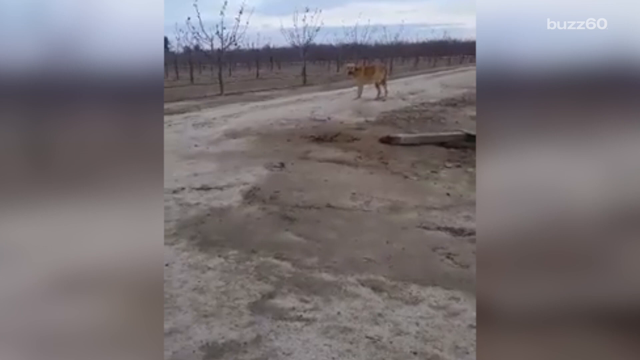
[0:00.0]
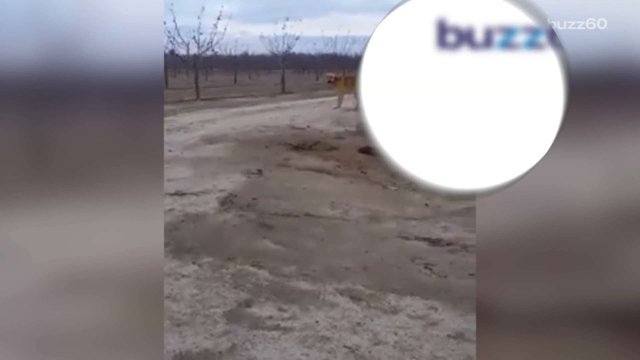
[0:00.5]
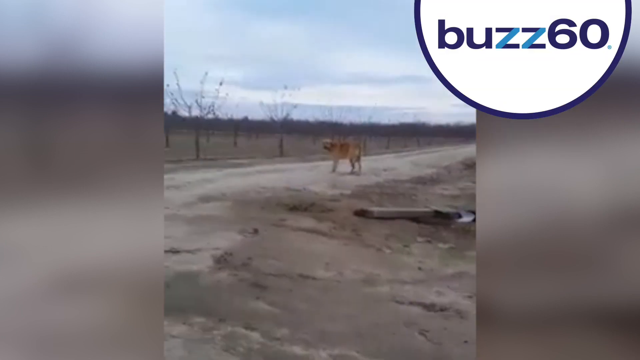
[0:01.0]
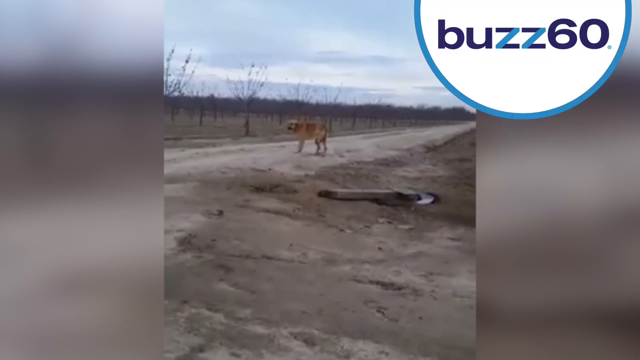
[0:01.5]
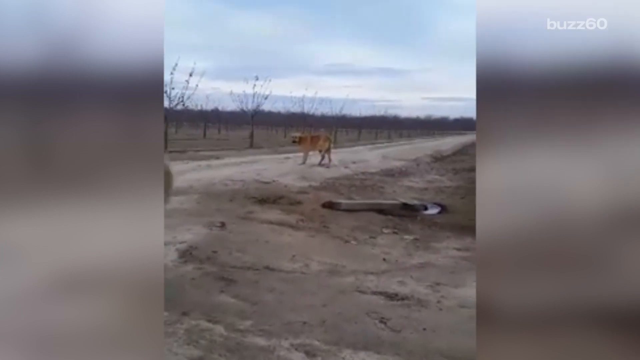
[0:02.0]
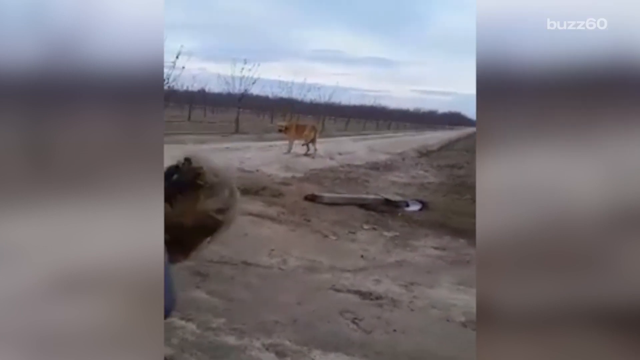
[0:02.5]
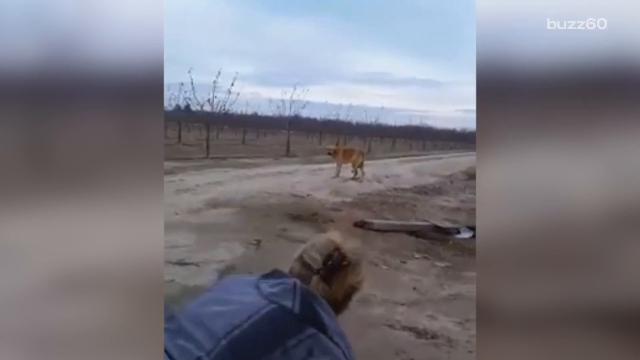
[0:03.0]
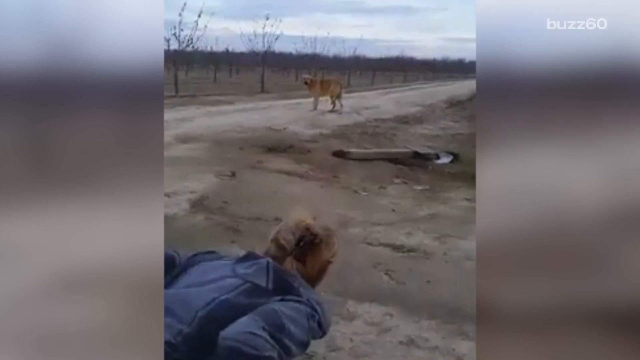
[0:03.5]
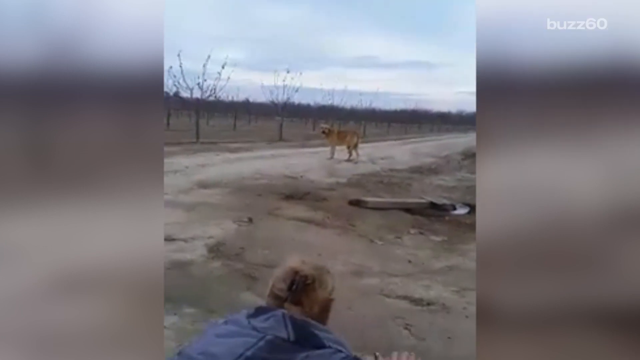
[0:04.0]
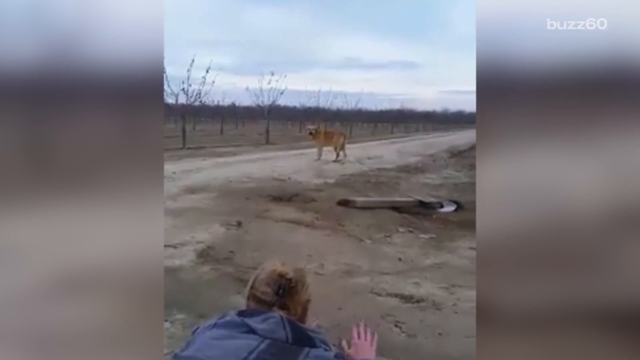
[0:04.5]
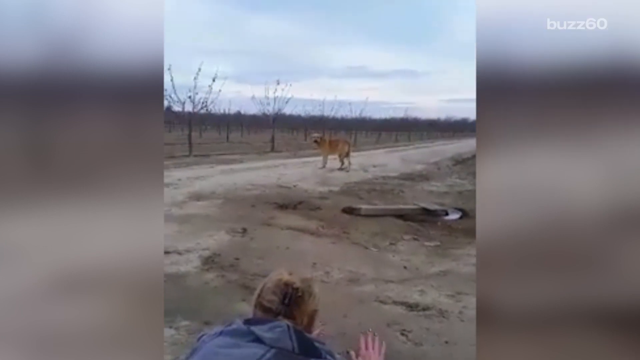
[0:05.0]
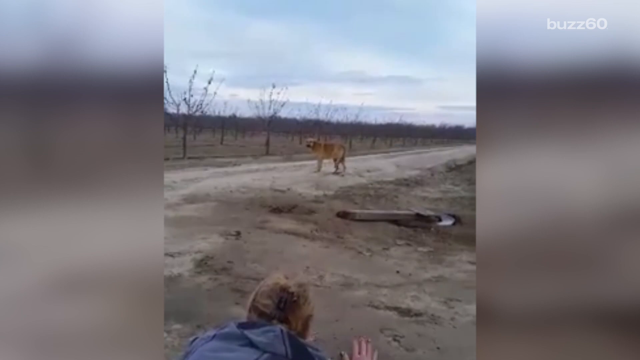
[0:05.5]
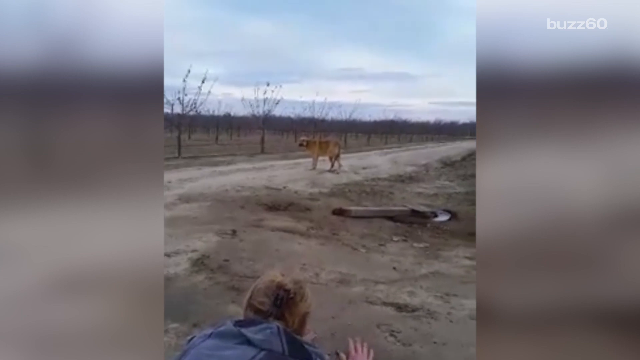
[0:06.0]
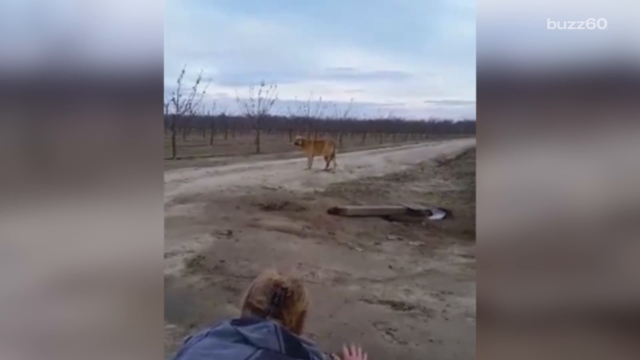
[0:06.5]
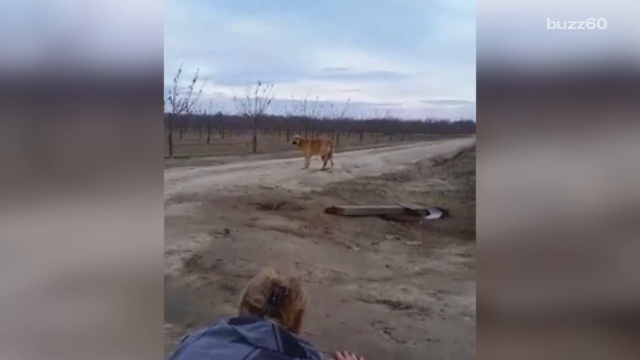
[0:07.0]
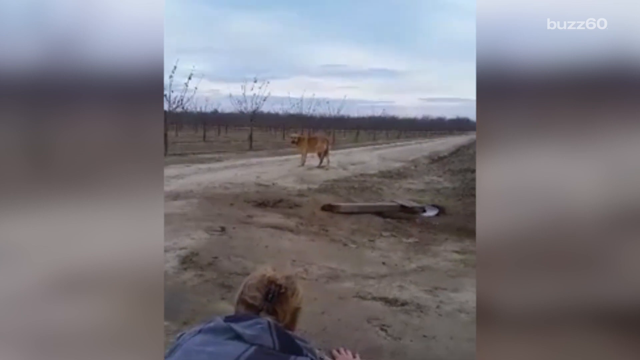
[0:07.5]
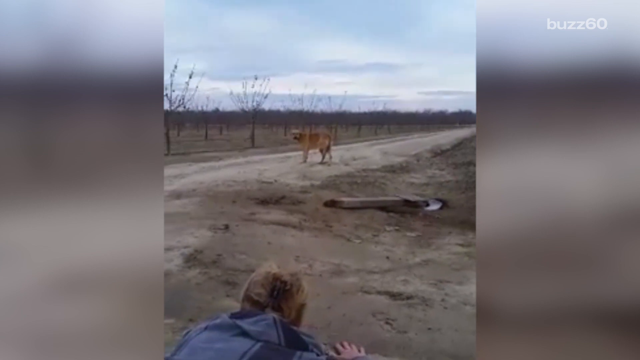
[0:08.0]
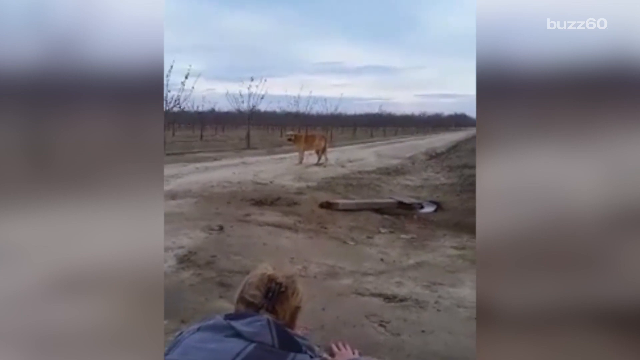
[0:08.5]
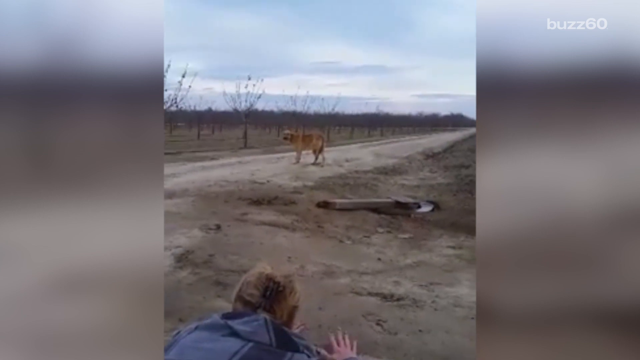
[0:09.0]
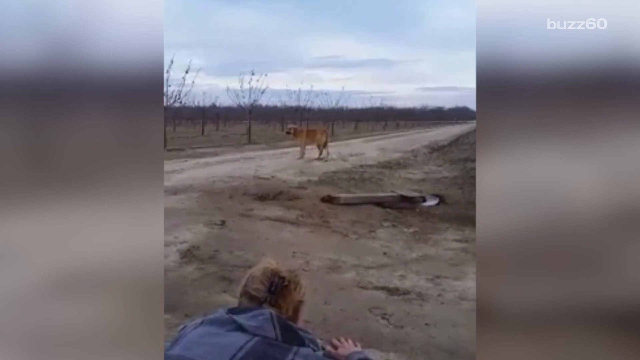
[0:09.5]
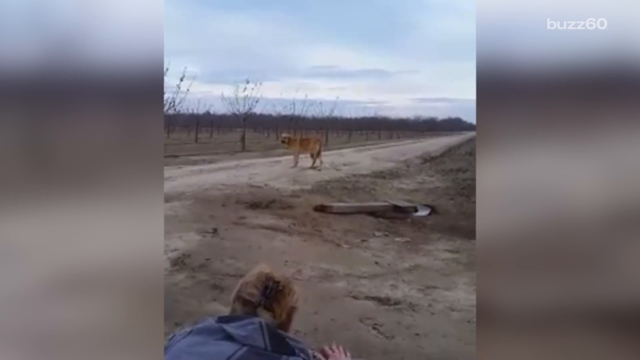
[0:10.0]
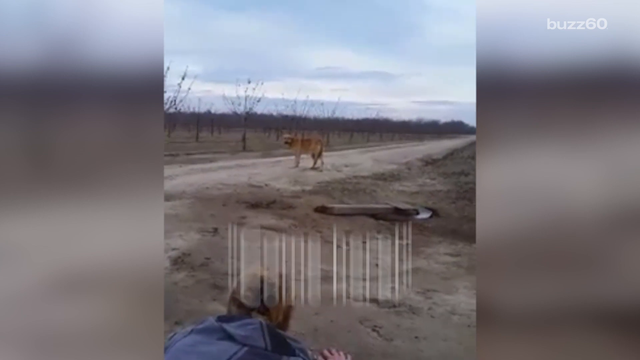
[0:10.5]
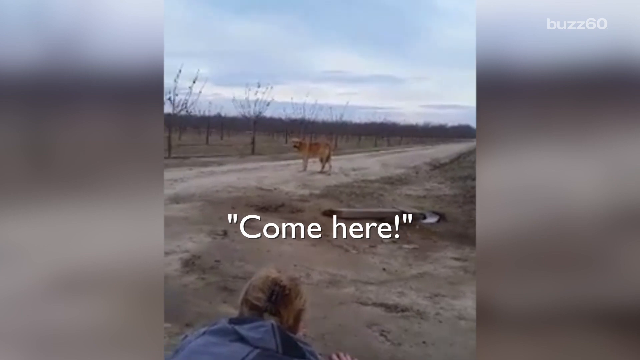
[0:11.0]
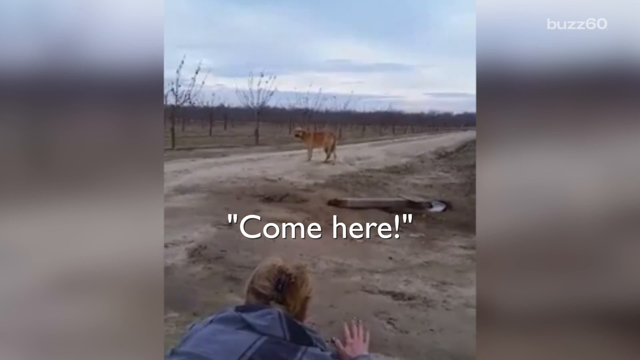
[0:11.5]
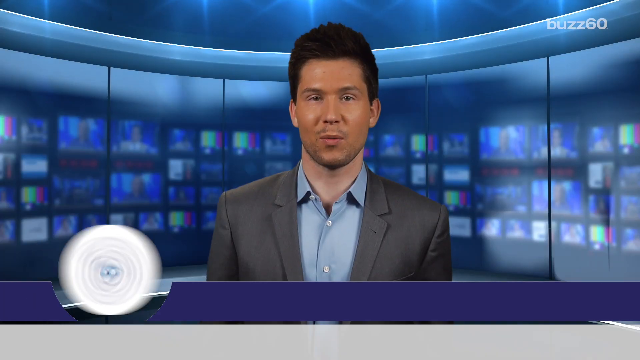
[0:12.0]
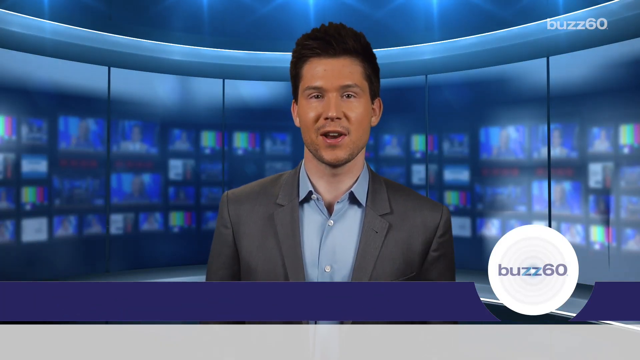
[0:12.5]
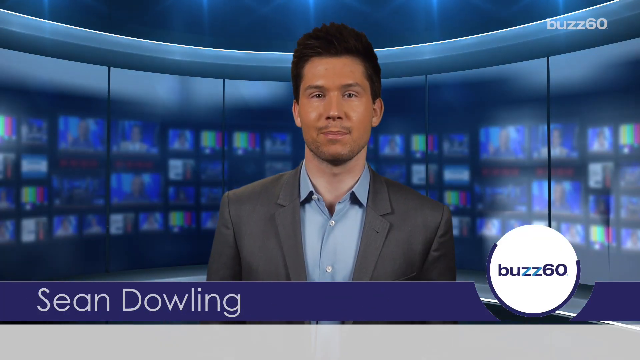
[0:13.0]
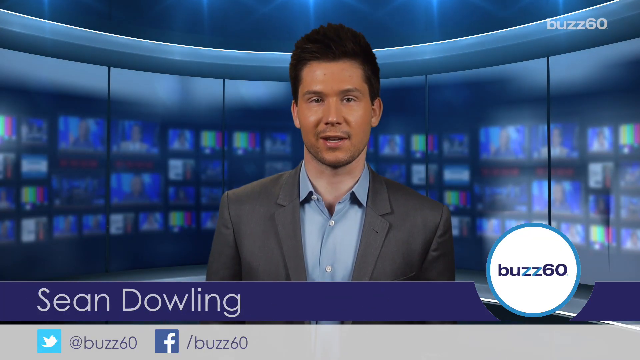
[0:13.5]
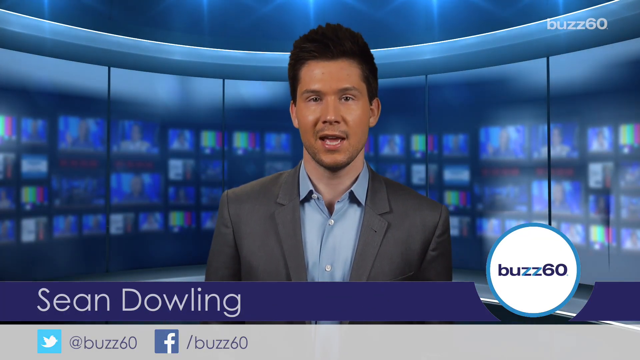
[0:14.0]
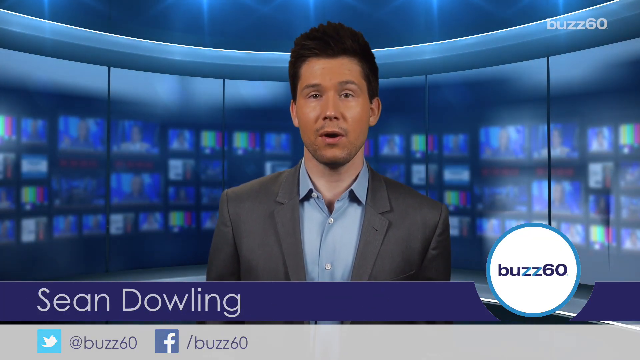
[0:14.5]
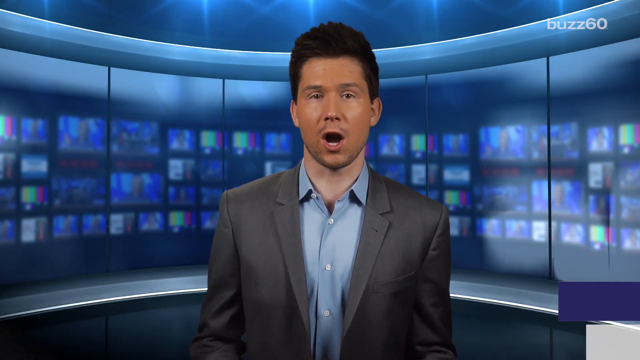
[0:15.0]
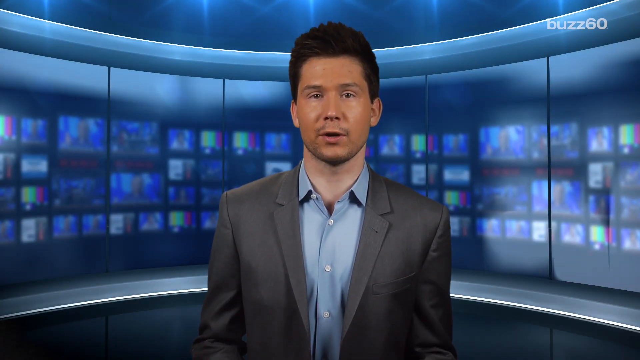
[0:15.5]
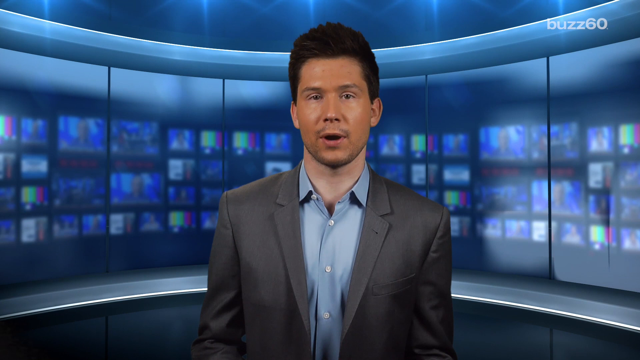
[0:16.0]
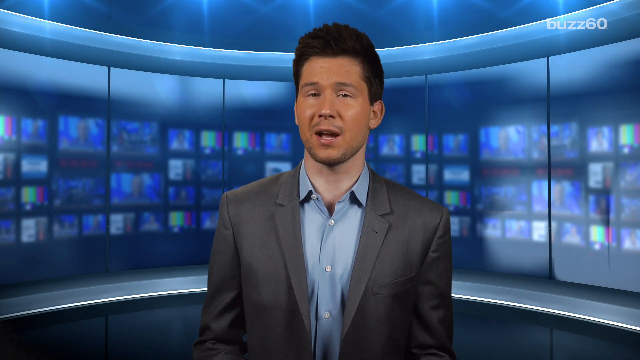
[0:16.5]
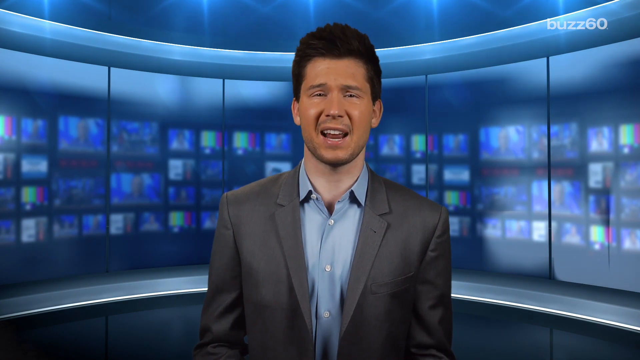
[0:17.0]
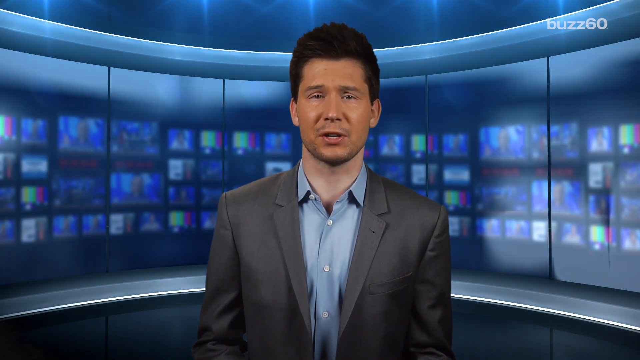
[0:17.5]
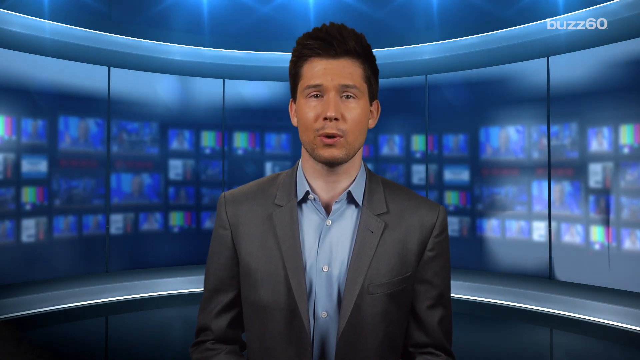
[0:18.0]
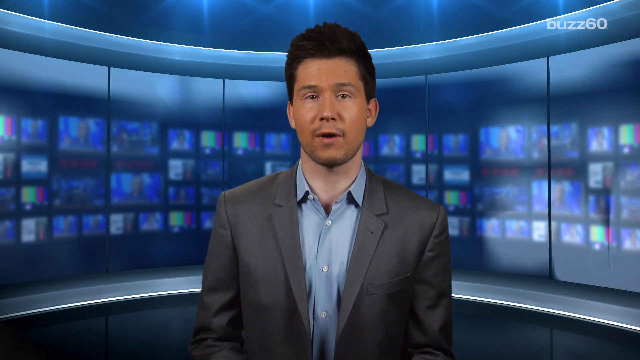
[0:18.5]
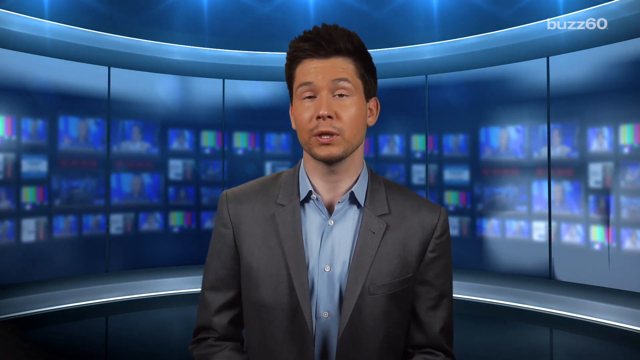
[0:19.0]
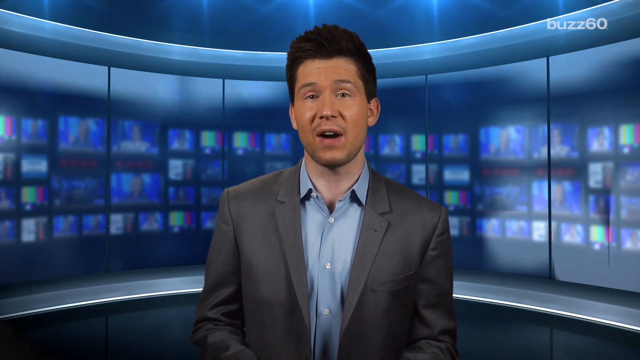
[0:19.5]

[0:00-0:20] In an open outdoor space, a person waves at a dog, apparently calling it to come over. The scene then changes to what looks like a newscaster in a studio, who is talking, with the name "Dean Darling" shown on him. The dog was possibly abandoned, and the person calling it is possibly trying to rescue it.